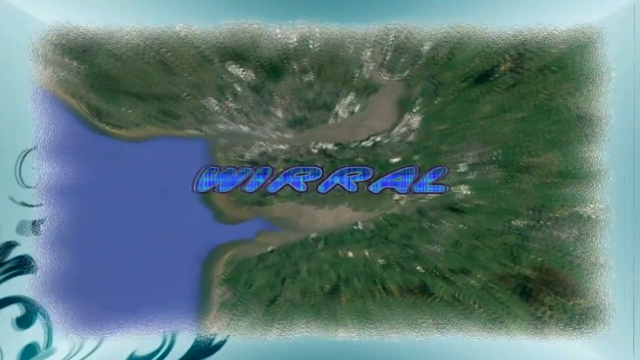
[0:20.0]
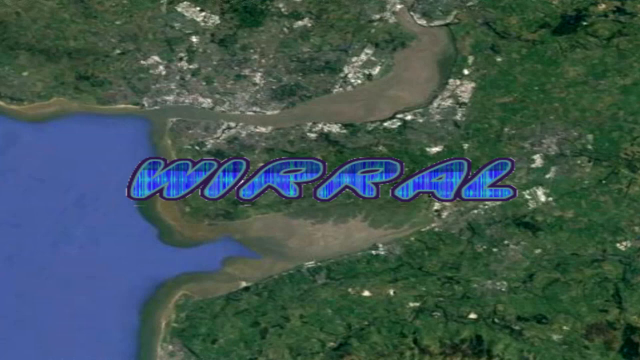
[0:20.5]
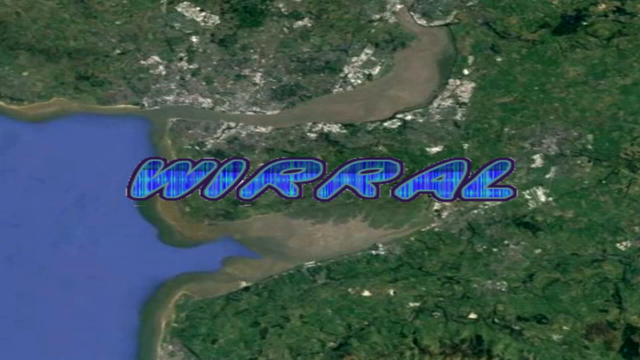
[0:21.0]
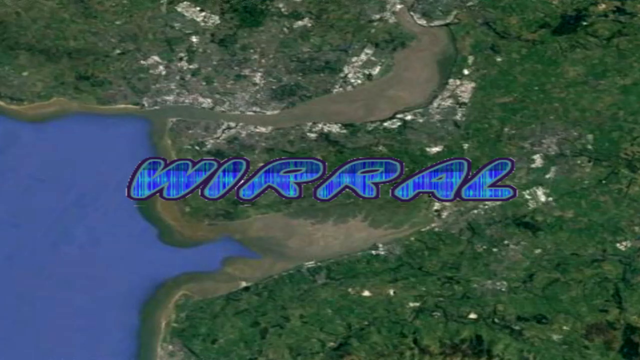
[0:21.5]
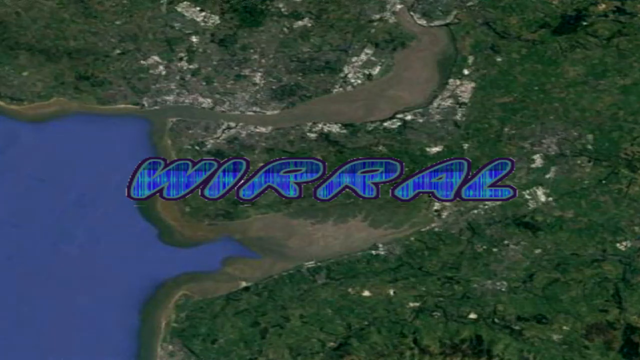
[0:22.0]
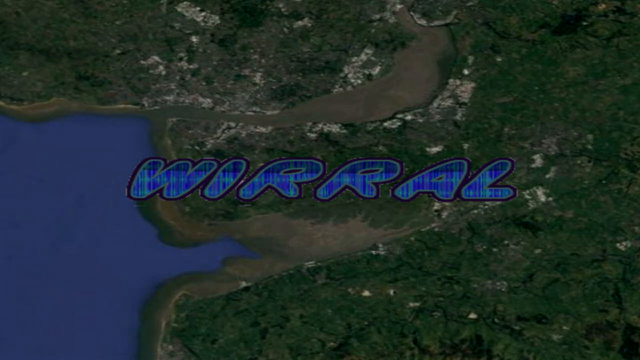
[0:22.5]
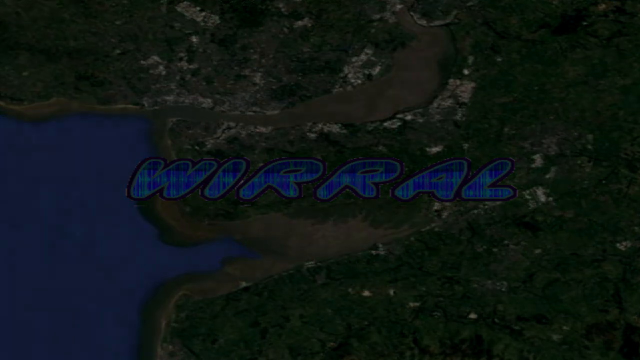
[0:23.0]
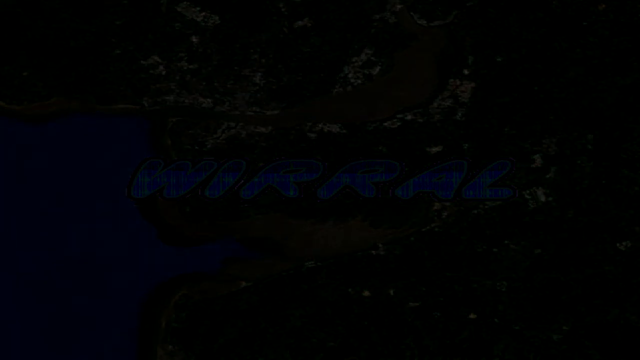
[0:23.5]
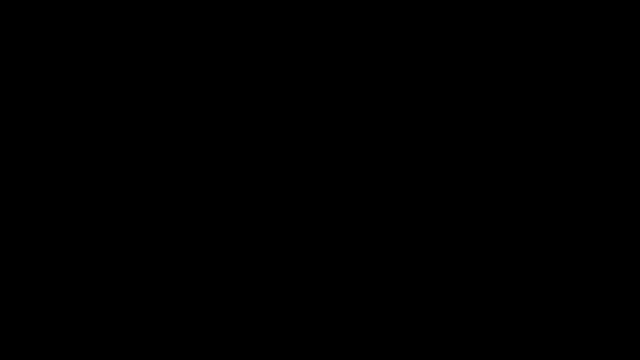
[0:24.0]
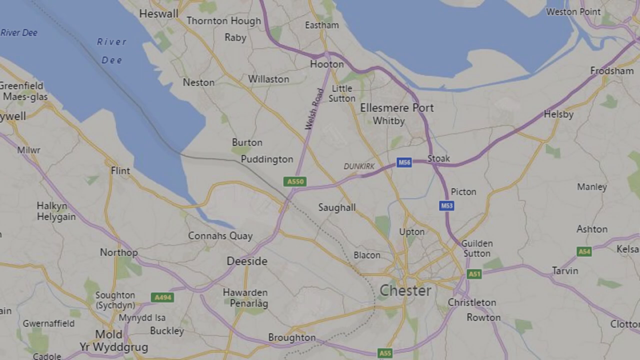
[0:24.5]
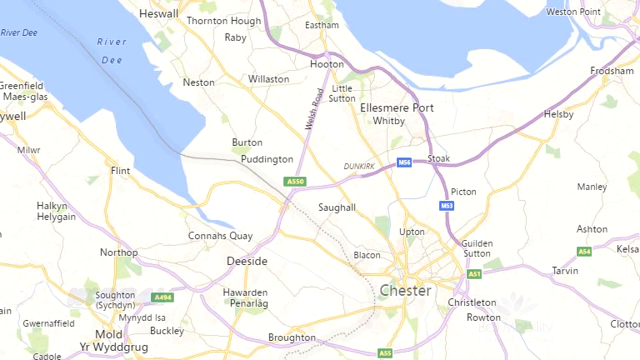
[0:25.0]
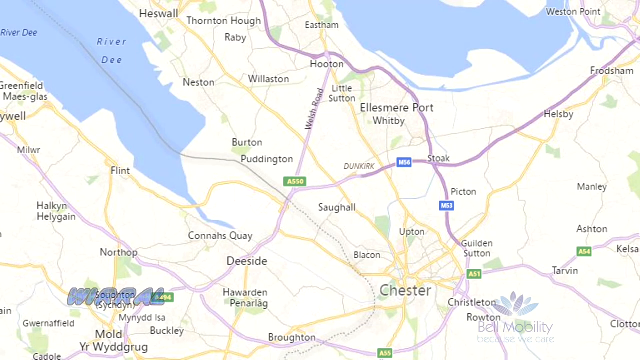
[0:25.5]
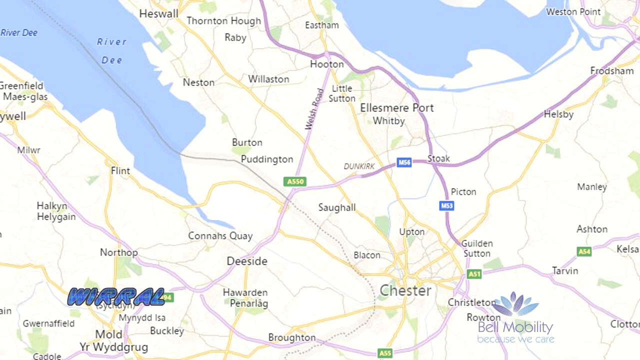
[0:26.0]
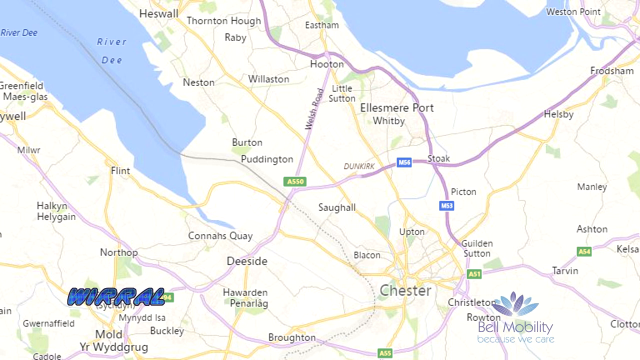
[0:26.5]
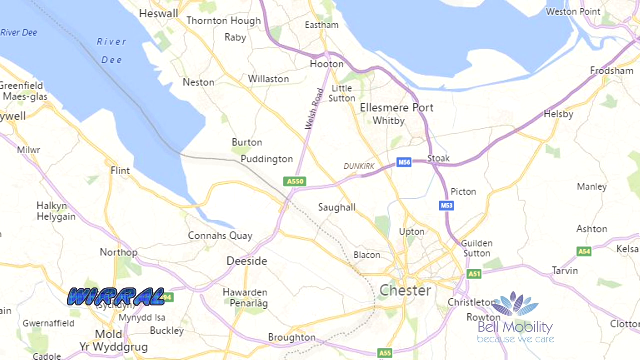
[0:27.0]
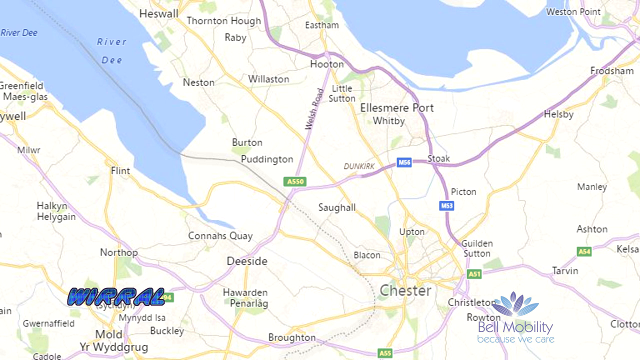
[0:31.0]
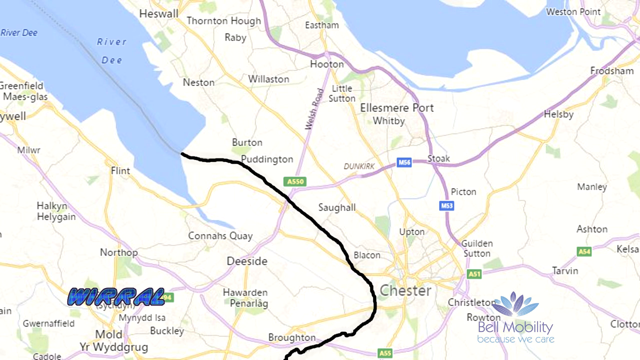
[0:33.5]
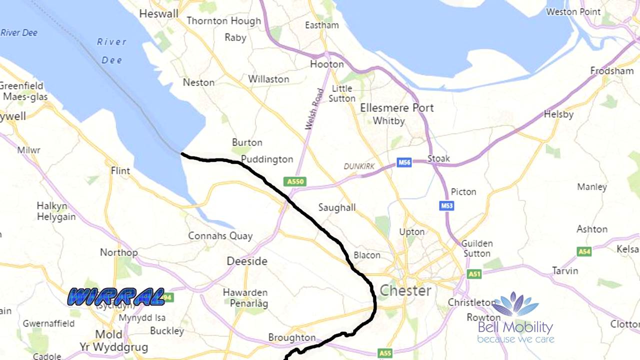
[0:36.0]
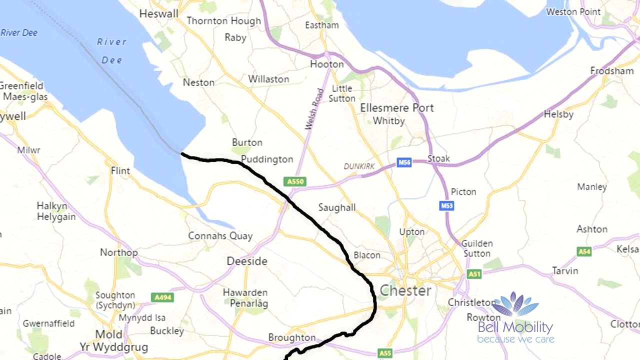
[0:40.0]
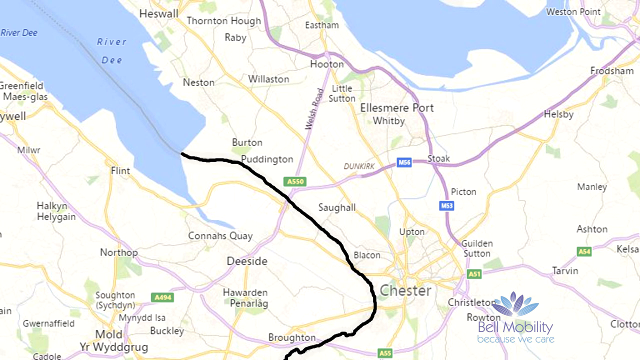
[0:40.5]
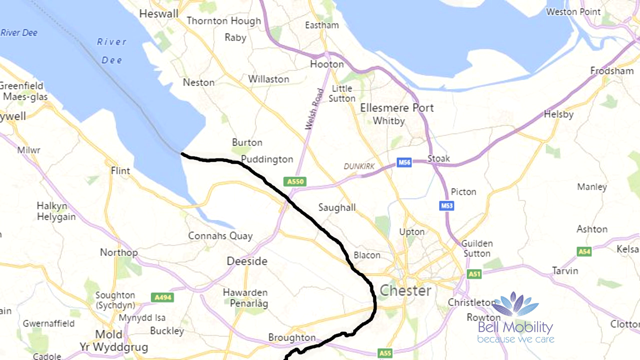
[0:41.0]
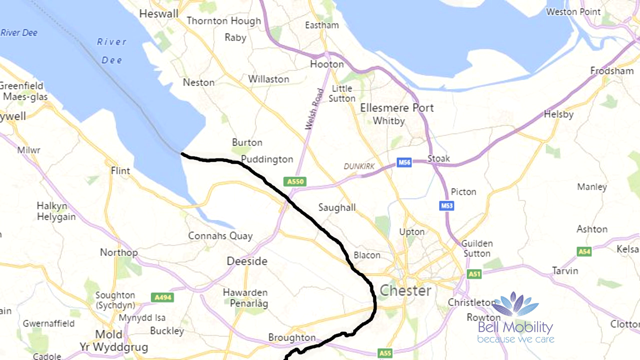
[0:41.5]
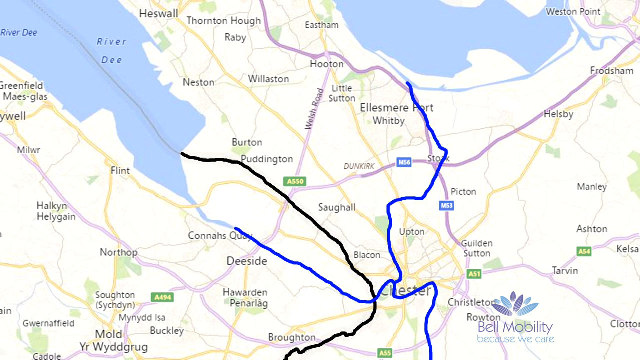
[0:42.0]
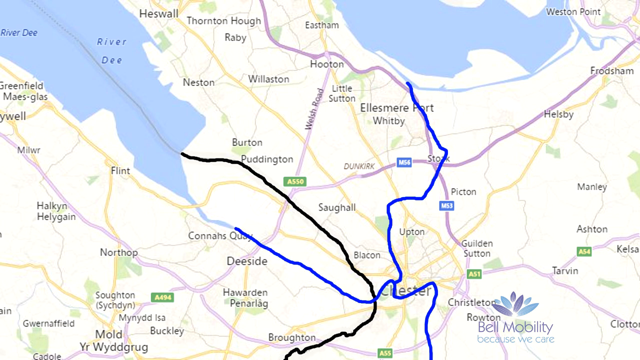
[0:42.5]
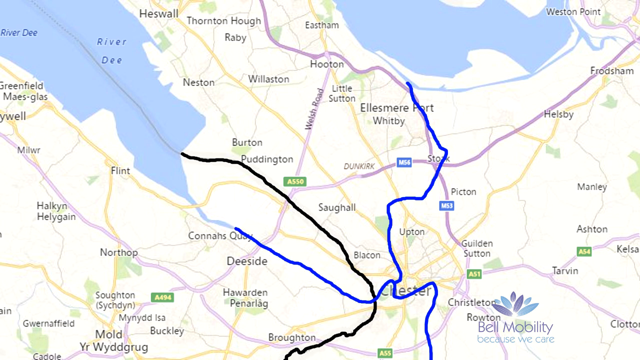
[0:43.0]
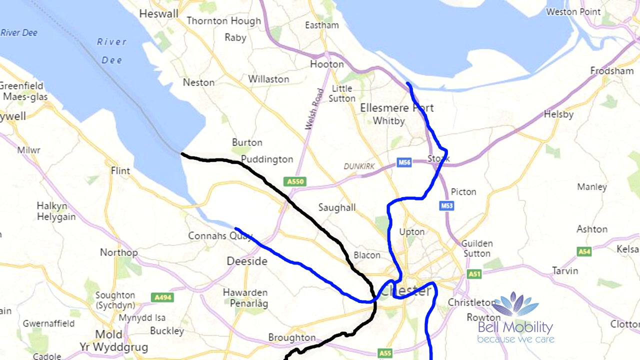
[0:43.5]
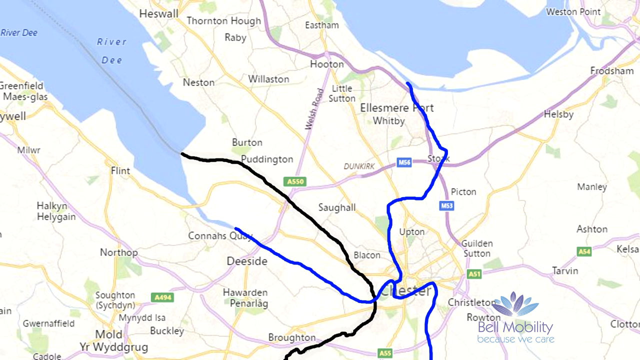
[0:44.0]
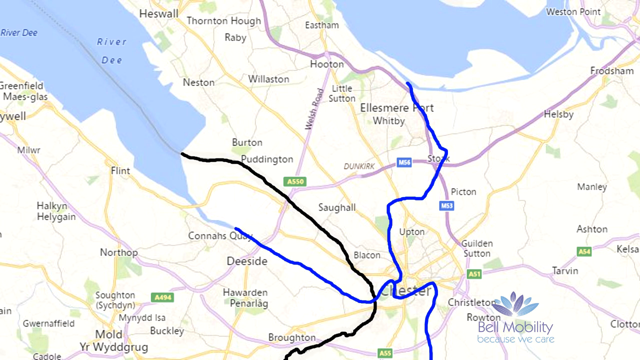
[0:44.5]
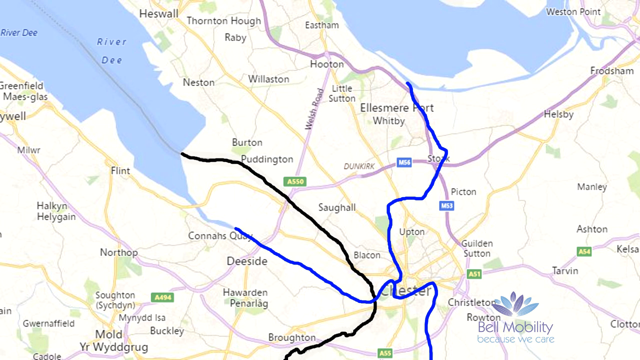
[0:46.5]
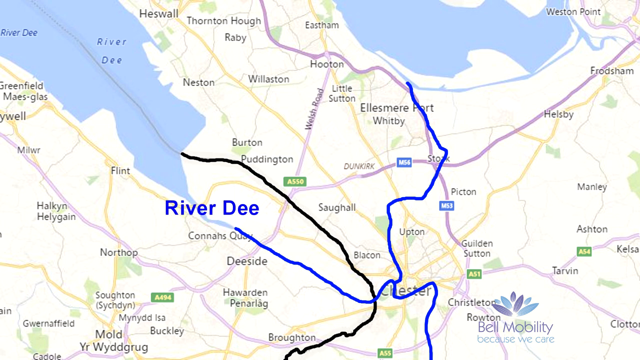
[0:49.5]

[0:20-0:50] The zoom continues until the small square fills the screen, showing a map of the Wirral, an area within Liverpool in the United Kingdom. From the aerial view it looks very much like Google Maps street view, though it is not zoomed in far enough to tell for certain. The screen fades to black, and a normal road-atlas-style map appears, a close-up of Chester. Chester is near the bottom of the screen; the map reaches as far as Northop and Connors Quay to the left, up towards Frodsham at the top right-hand side, with Hesse Wall at the top northern edge, and the River Dee is visible on the left. The map is a still picture, apart from occasional zooming in and out. A black line appears on the map, cutting Chester off from the Wirral; it runs from Puddington and Connors Quay on the Wirral side, with Chester on the right-hand side. Then blue lines appear. One blue line runs from Connors Quay, dissects Chester and goes south, leaving Christleton and Roton on the right-hand side; Bow Mobility is also on the right-hand side of this line, perhaps indicating where the shop is. The other blue line is further north, running from the middle of Chester to Ellesmere Port, with the A550 and Sugg Hall on its left and Guilden Sutton and the A51 on its right.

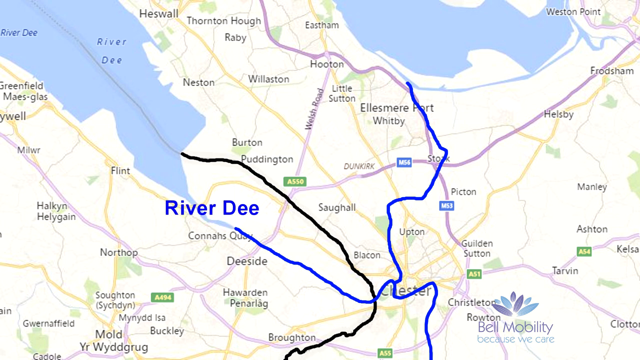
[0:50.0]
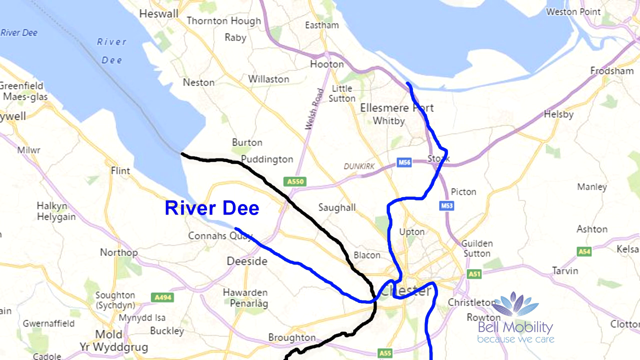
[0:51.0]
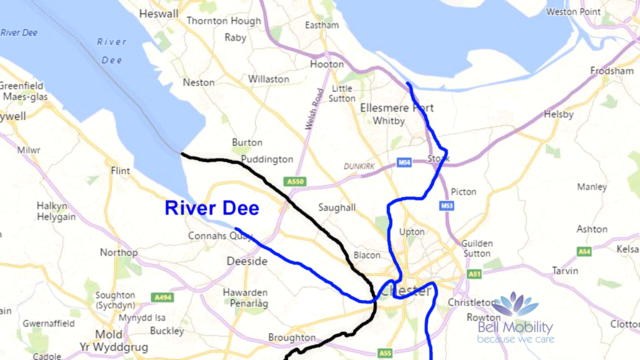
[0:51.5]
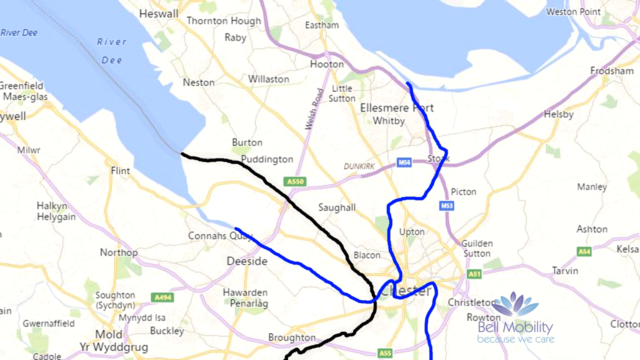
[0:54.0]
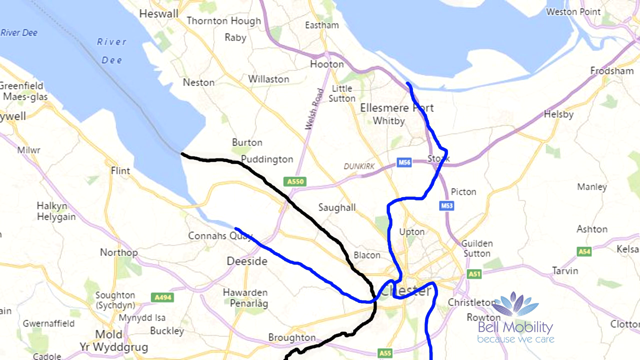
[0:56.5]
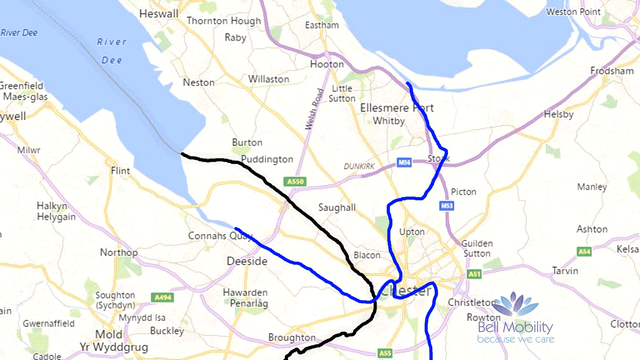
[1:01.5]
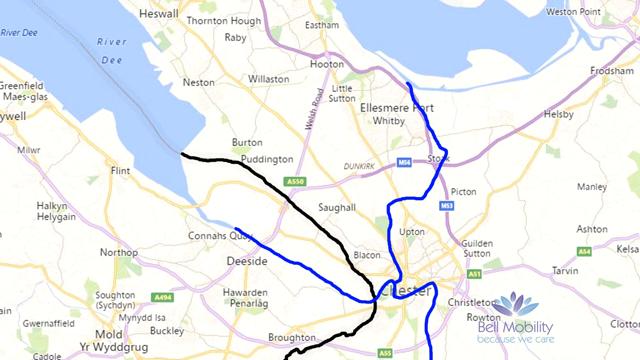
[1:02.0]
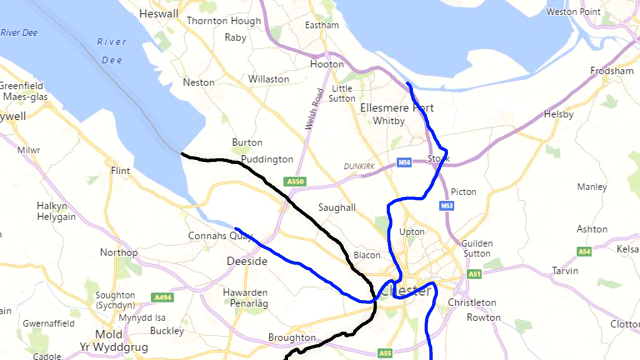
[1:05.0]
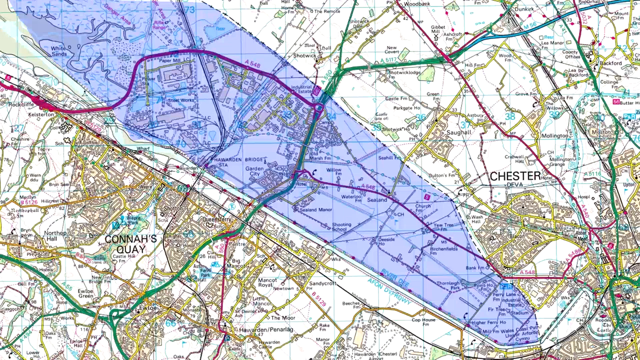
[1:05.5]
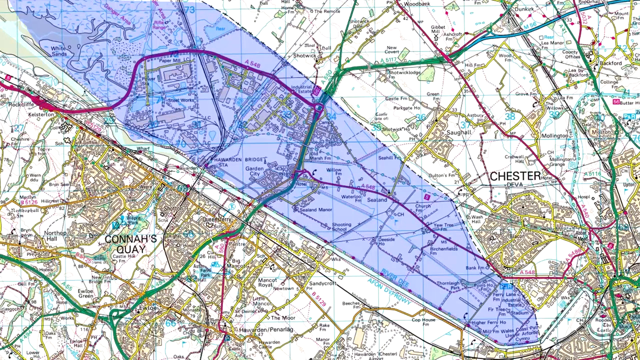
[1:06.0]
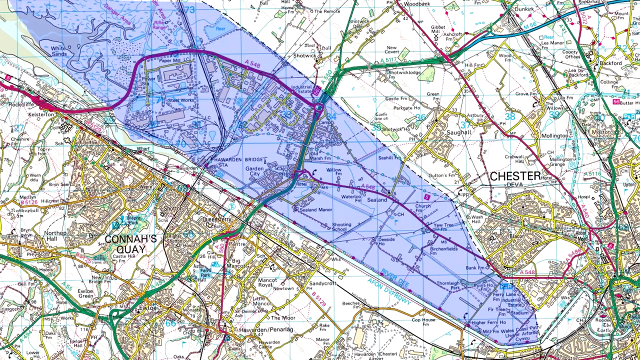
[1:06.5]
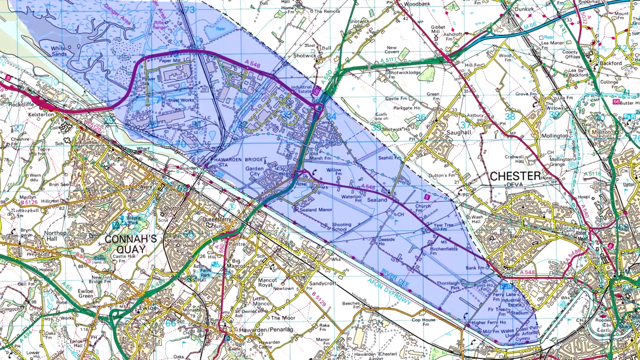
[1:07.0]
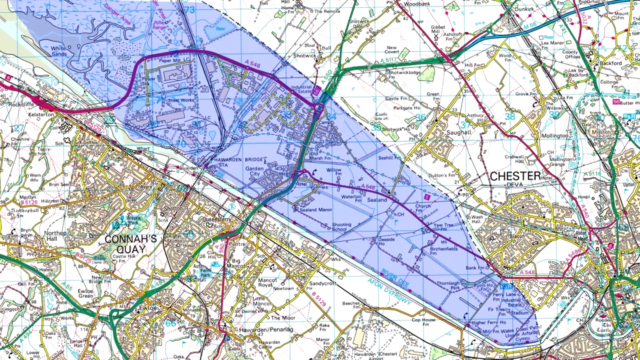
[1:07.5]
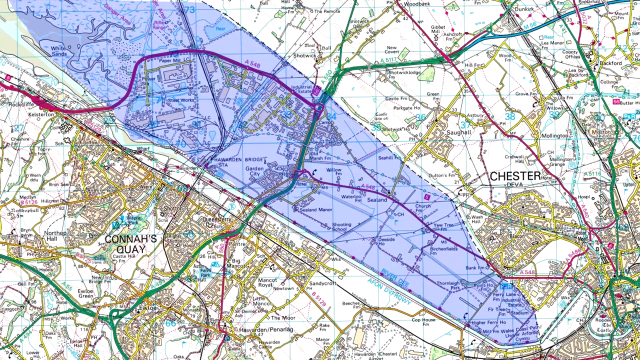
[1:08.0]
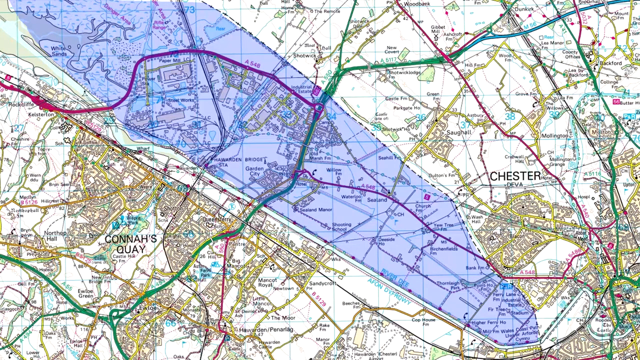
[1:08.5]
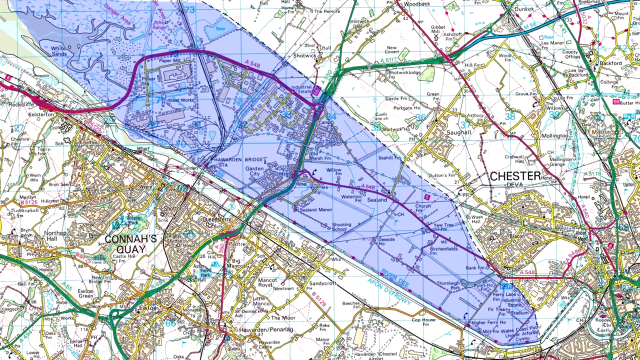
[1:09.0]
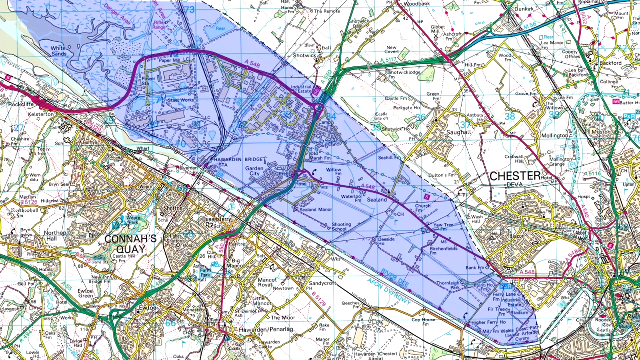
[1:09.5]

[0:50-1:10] The zoomed-in still map of Chester and the Wirral remains, with demarcation lines drawn on it splitting the area into Chester, the Wirral, and a couple of northern and southern parts of Chester. The image stays still for a while. Then a different, much more detailed map of Chester and Connors Quay appears, showing conurbations, developments, buildings and many small minor roads, where the earlier maps showed only the main area names and one or two main roads. An area marked in blue is right in the centre, though it is difficult to see what it covers; Chester is to the right of the blue area and Connors Quay to the left. The A48 runs through it, along with what looks like one of the main motorways, perhaps the M62. The map is so detailed that its smaller features cannot really be made out. It remains a still image.